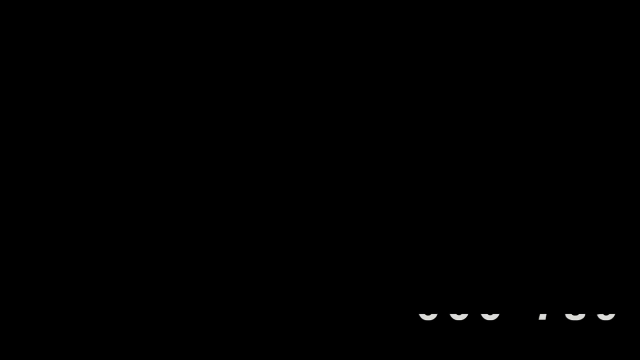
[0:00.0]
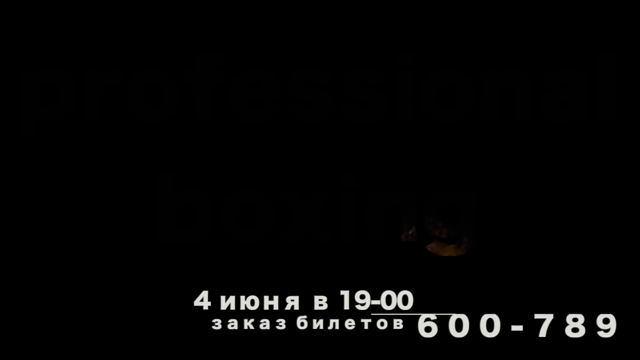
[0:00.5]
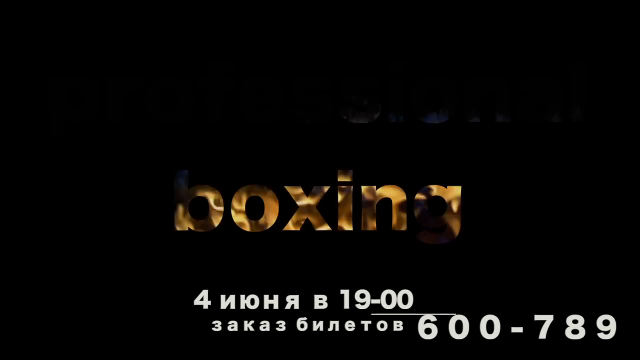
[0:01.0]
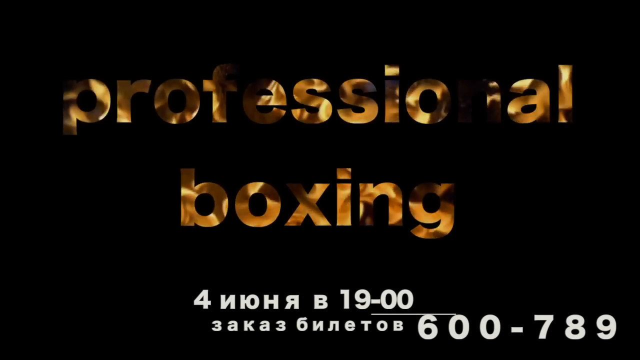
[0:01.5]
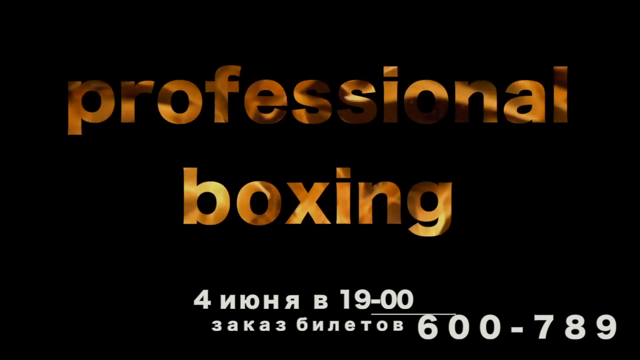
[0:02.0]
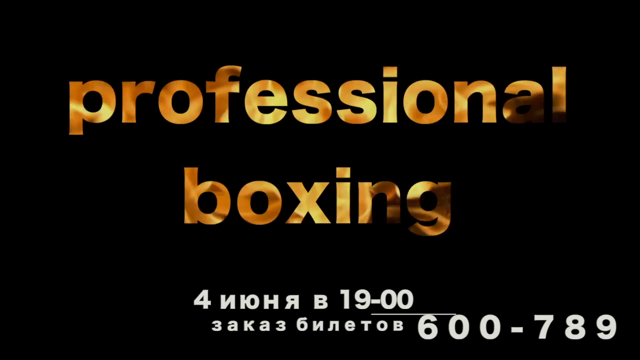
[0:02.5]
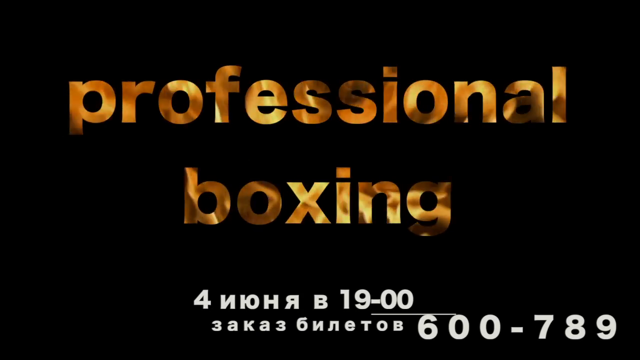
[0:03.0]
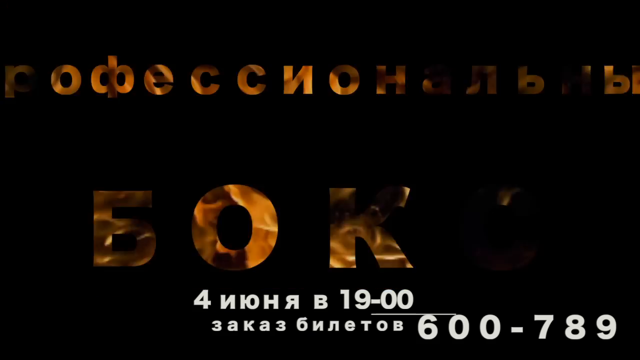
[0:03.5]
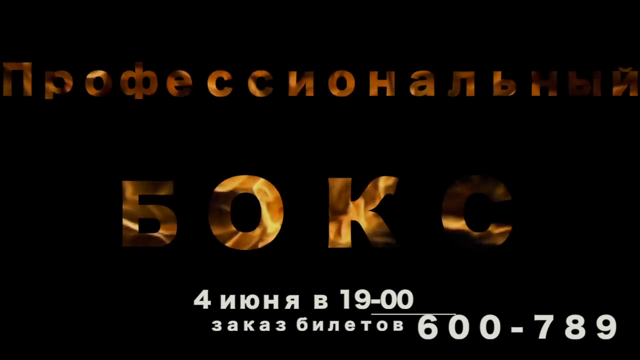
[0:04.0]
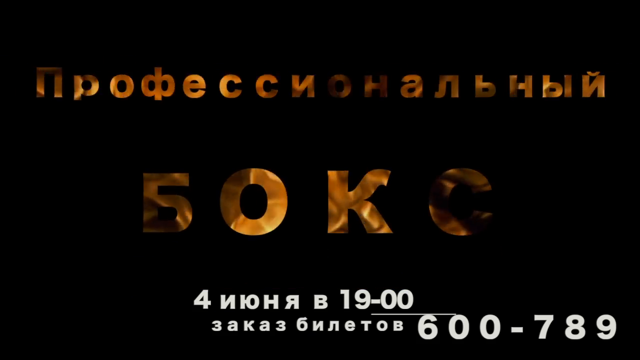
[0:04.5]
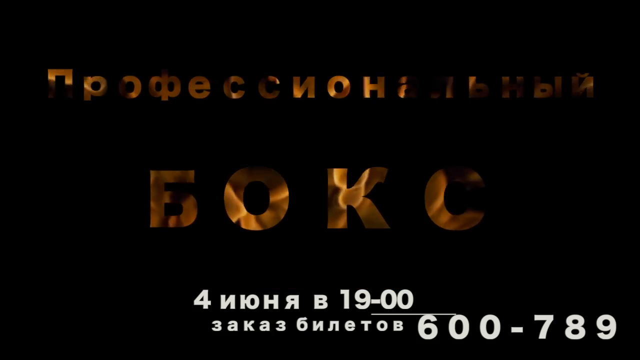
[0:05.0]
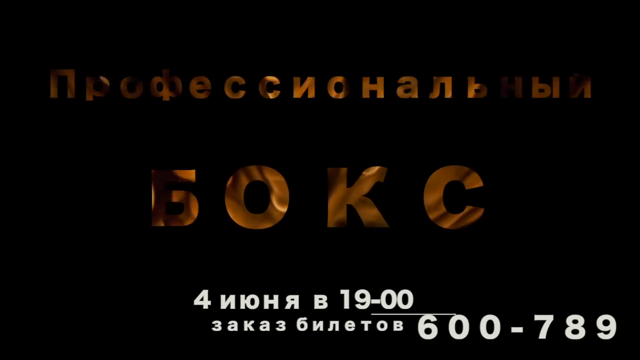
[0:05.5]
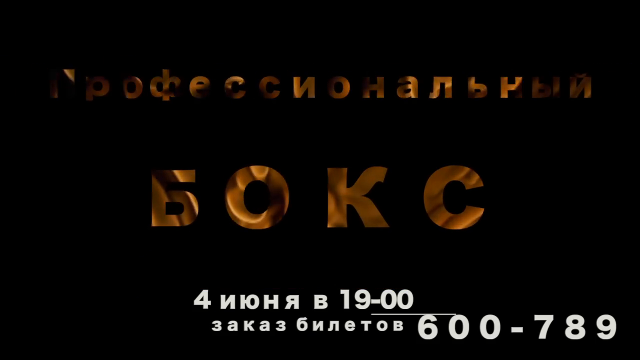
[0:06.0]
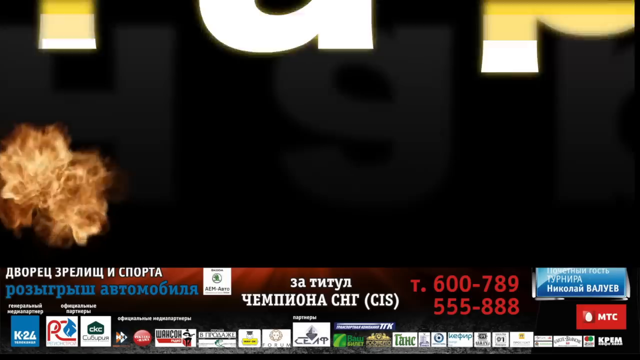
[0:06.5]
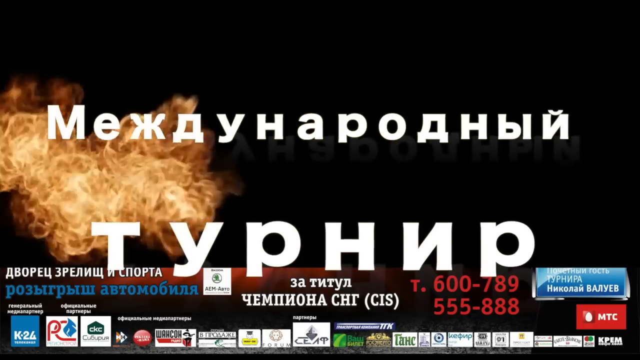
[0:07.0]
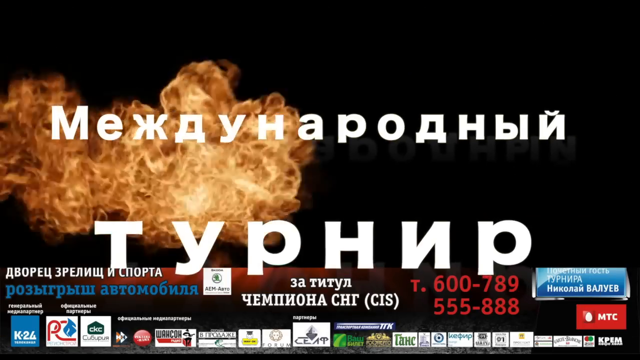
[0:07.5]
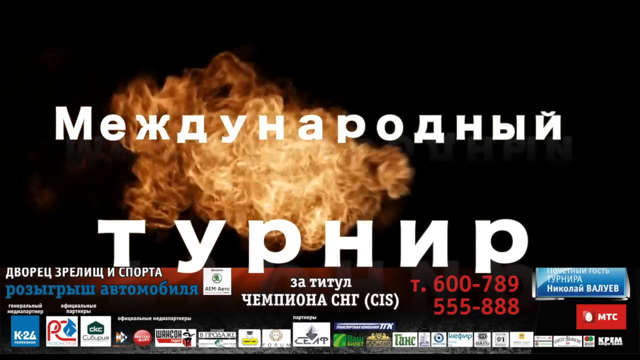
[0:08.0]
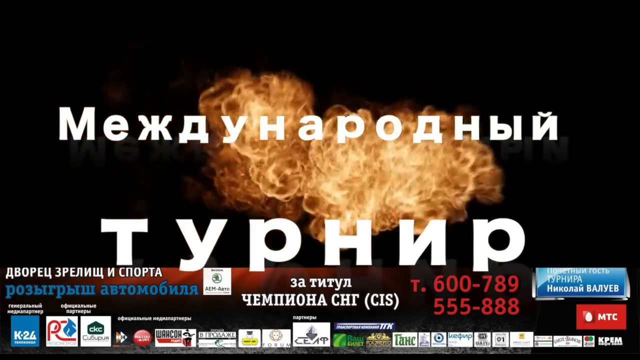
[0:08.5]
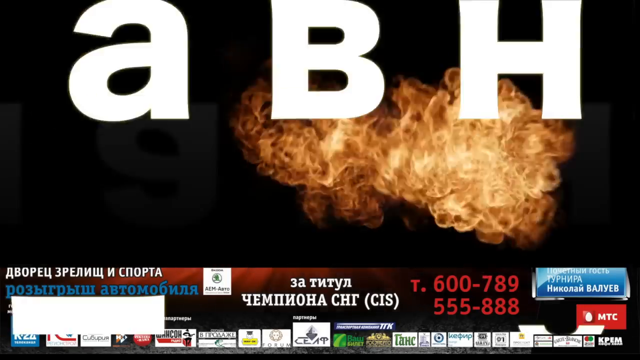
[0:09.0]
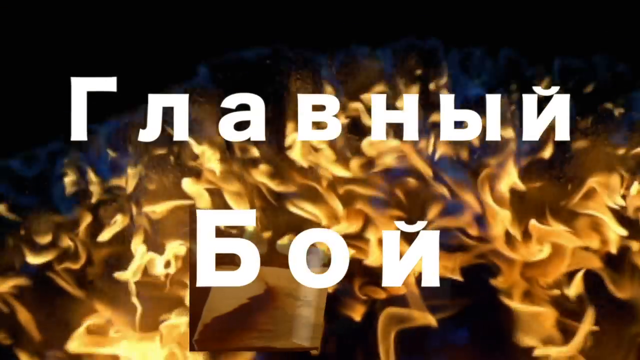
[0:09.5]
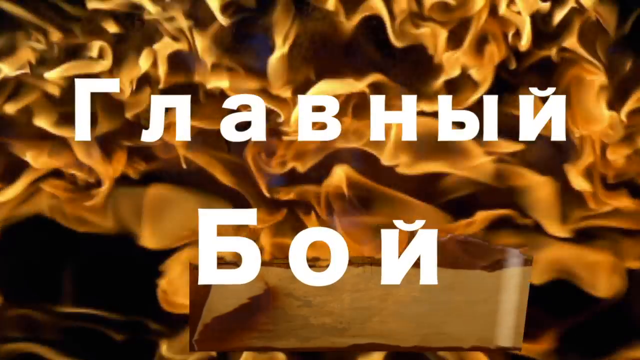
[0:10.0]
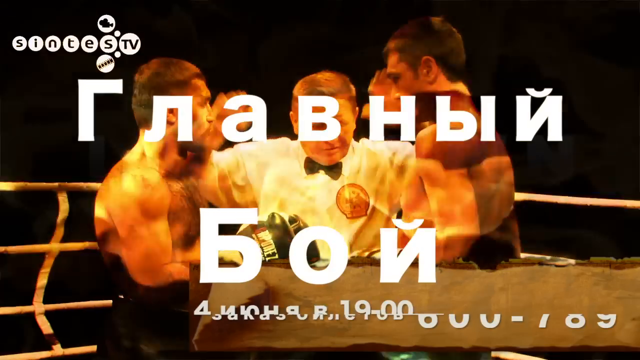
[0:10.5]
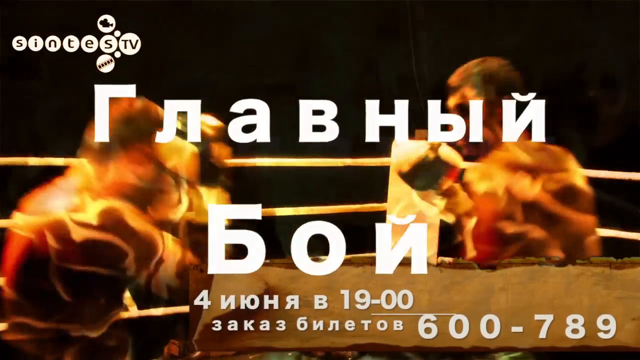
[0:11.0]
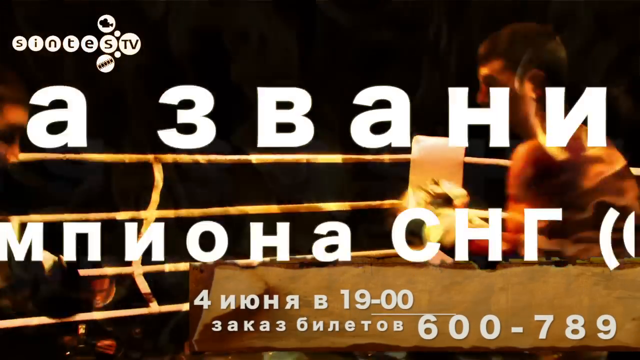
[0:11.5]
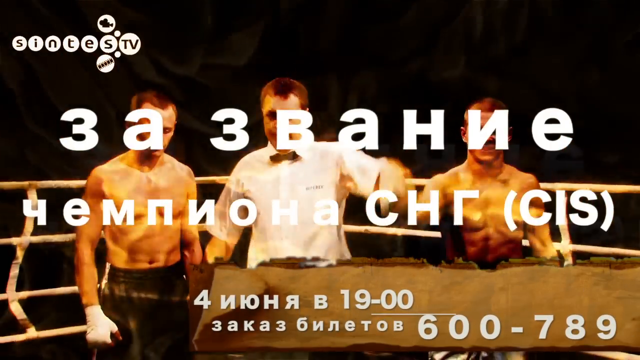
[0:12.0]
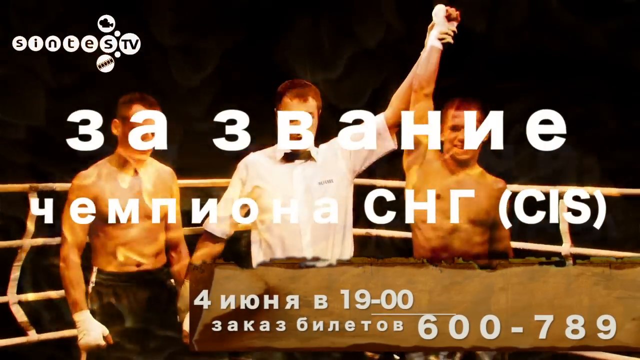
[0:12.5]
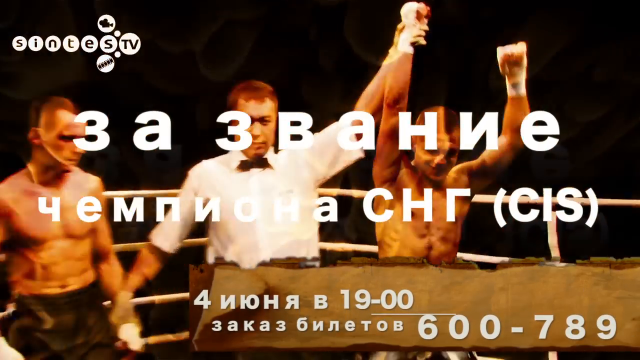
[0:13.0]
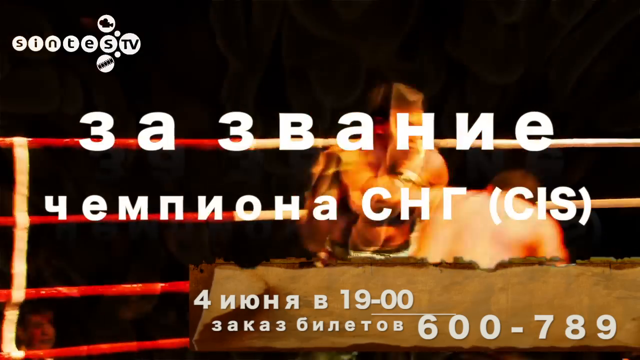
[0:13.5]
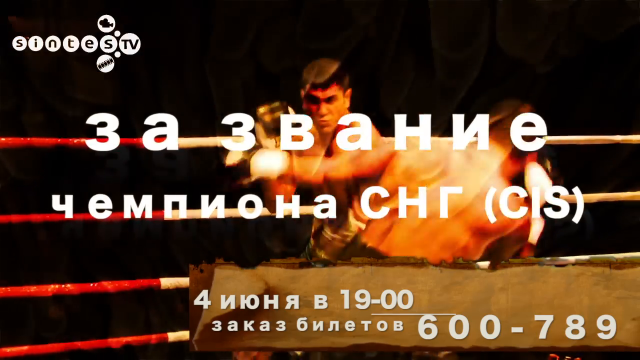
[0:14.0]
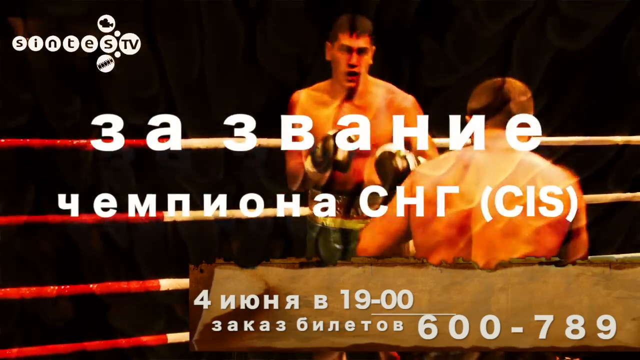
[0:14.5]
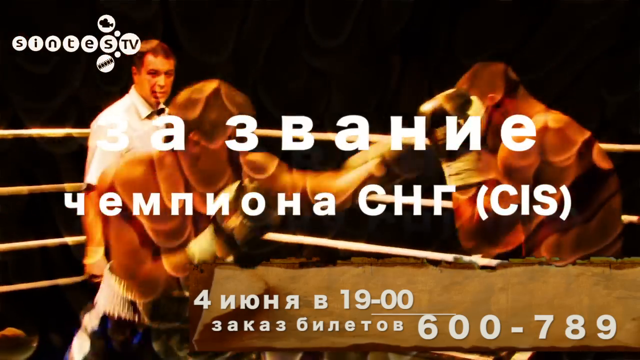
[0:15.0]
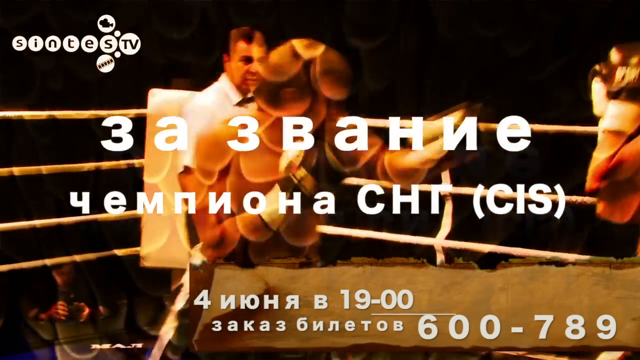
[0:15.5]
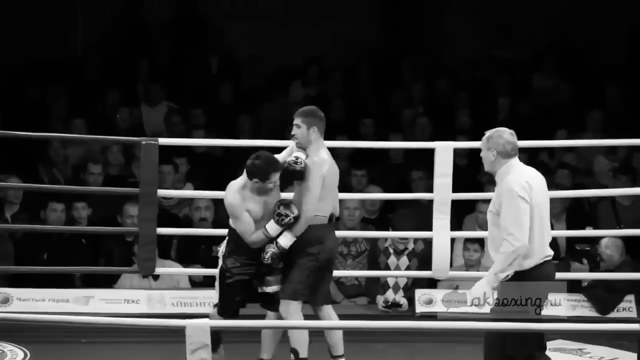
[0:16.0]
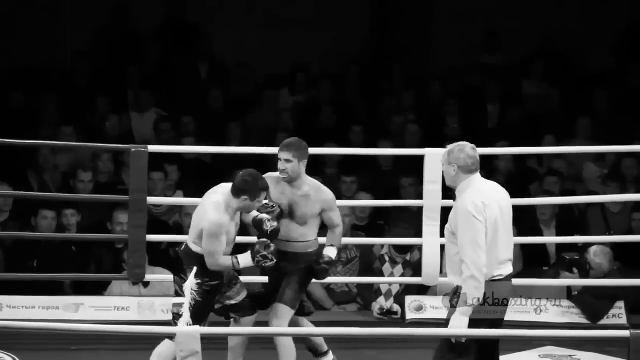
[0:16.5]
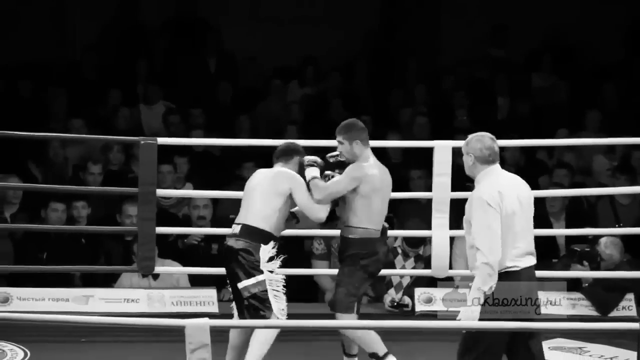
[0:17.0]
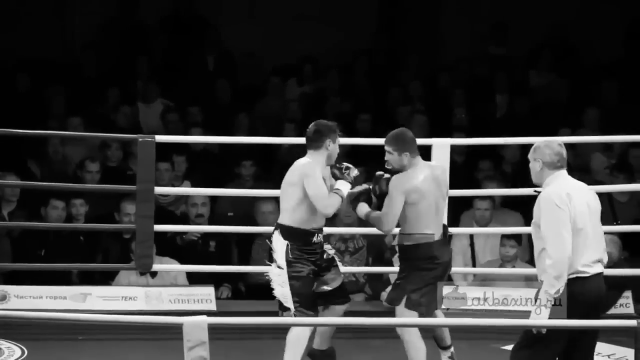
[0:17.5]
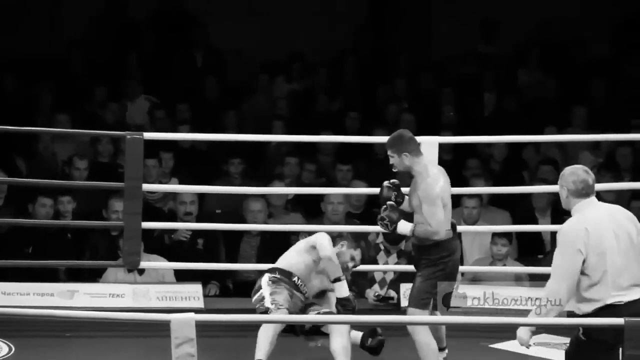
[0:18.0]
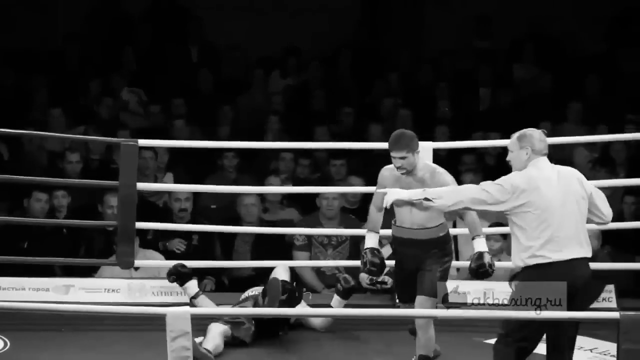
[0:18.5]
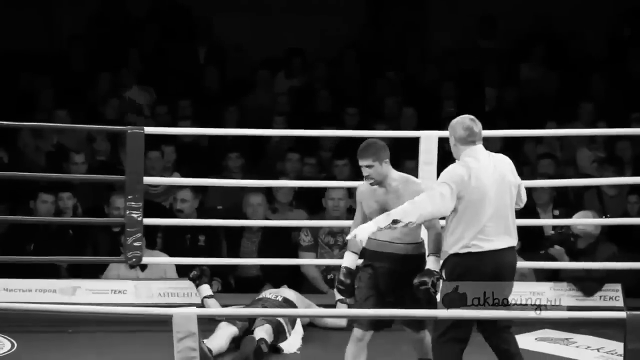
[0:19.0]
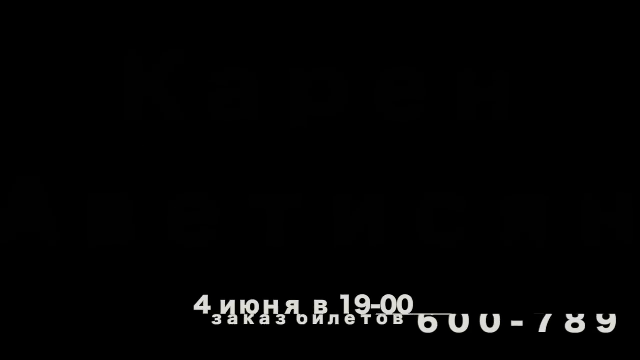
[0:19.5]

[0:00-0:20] At the beginning, a pop-up reads "professional boxing" in a brownish color, with a dynamic image like fire burning inside the name. Below it is white text that appears to be Russian. The "professional boxing" name is then switched out for Russian letters in the same color, over the same fire-like background. The scene switches, and white Russian text pops up in the middle while a large flame of fire moves from left to right in the background. The scene switches once more to white Russian text over a background of a large flame burning. Next, the background seems to show boxers; the referee raises the hand of the boxer on the right. The two boxers are then seen fighting while Russian text repeatedly appears in front. Before the end, a black-and-white shot shows one boxer knocking down another and walking away.